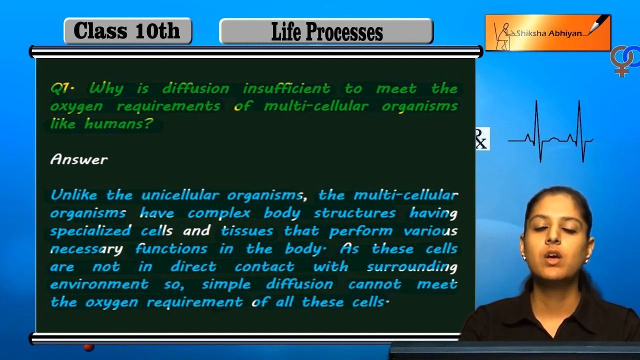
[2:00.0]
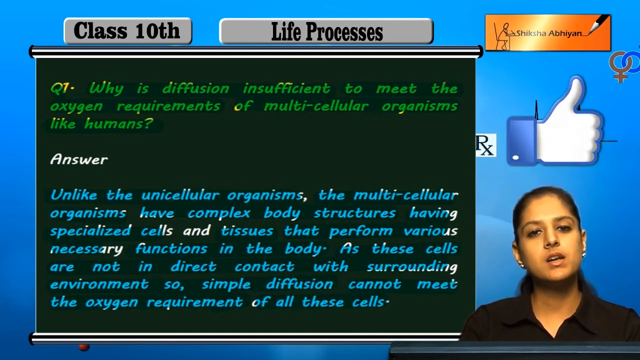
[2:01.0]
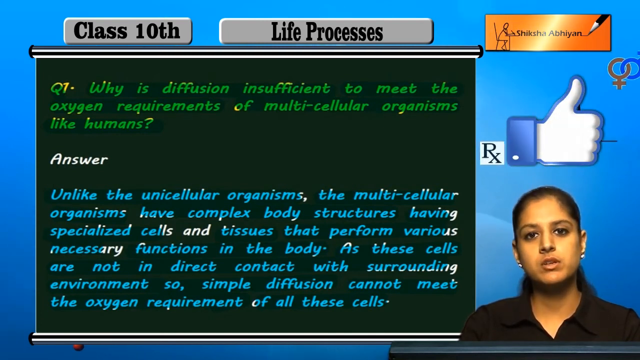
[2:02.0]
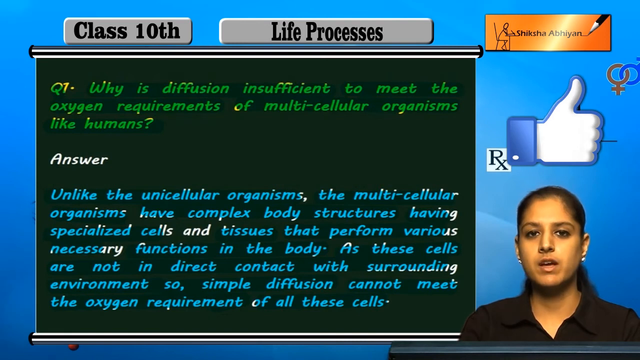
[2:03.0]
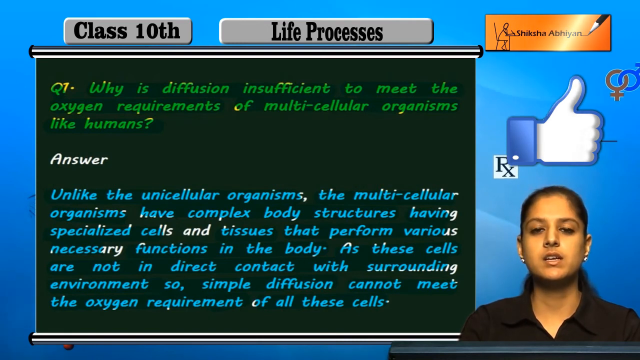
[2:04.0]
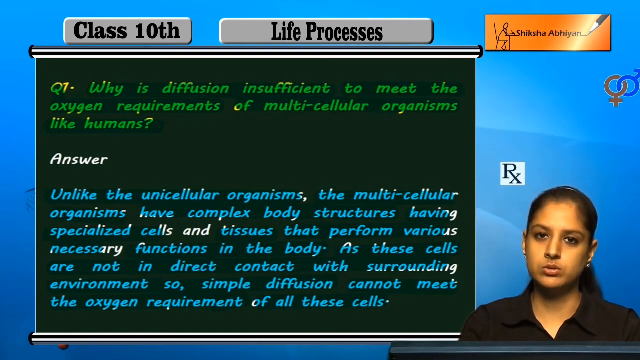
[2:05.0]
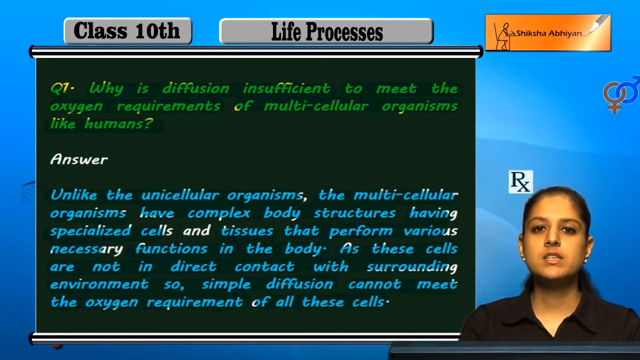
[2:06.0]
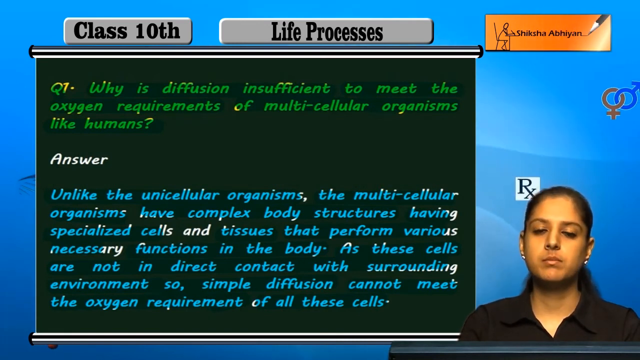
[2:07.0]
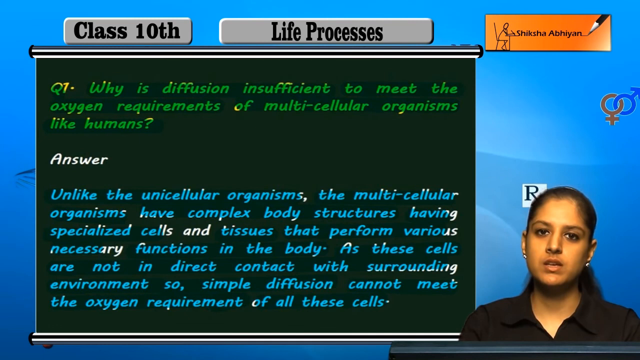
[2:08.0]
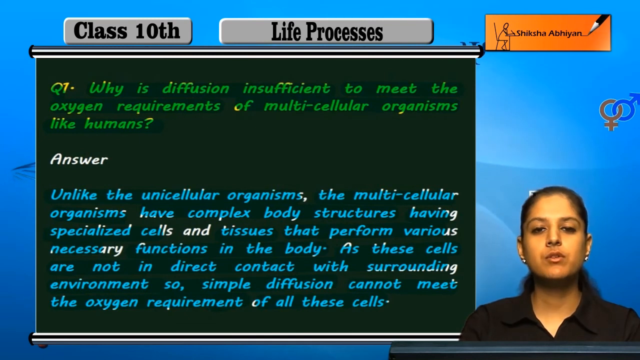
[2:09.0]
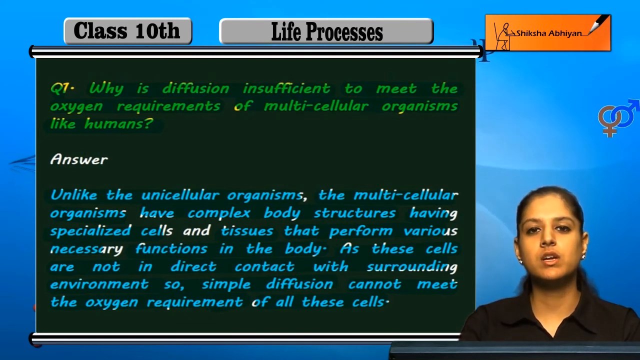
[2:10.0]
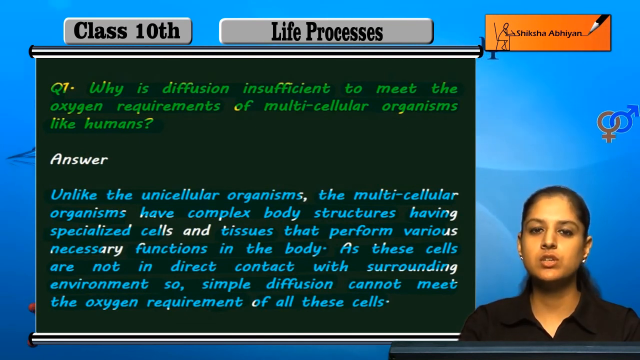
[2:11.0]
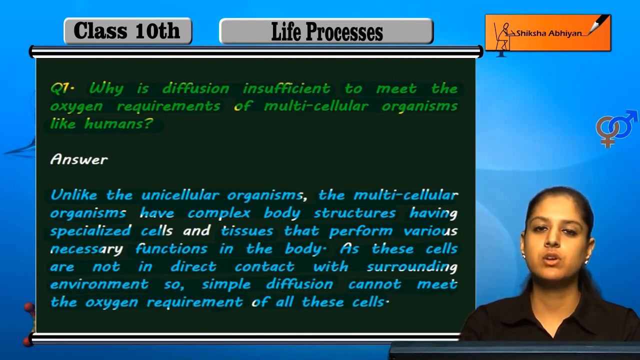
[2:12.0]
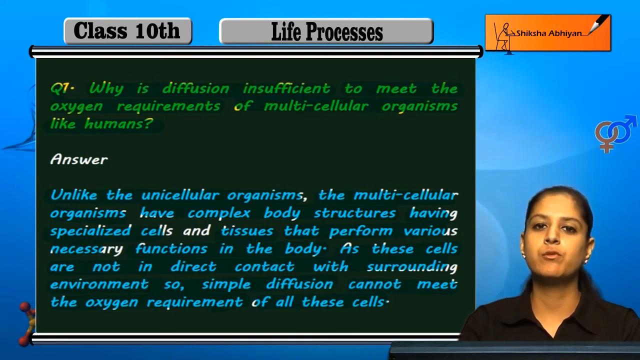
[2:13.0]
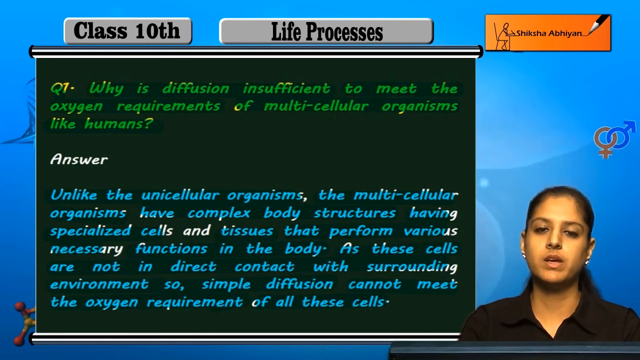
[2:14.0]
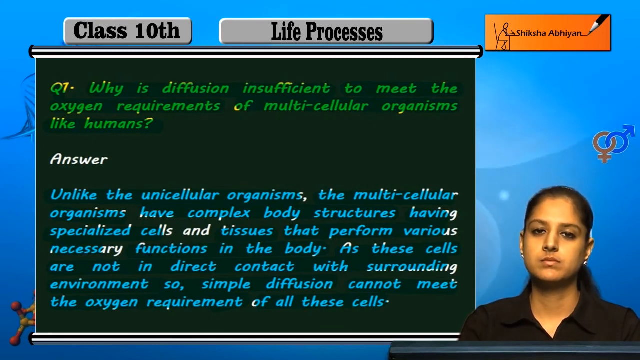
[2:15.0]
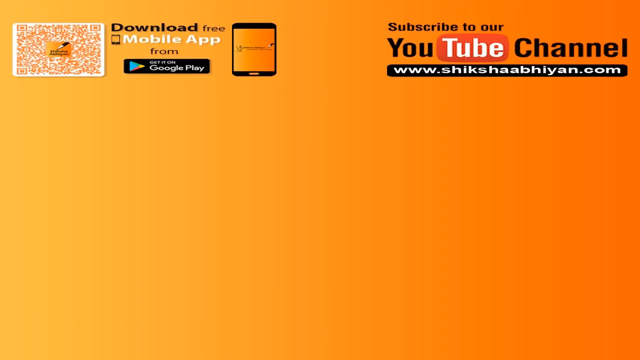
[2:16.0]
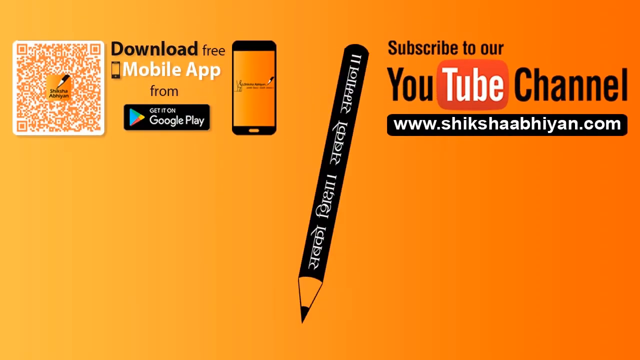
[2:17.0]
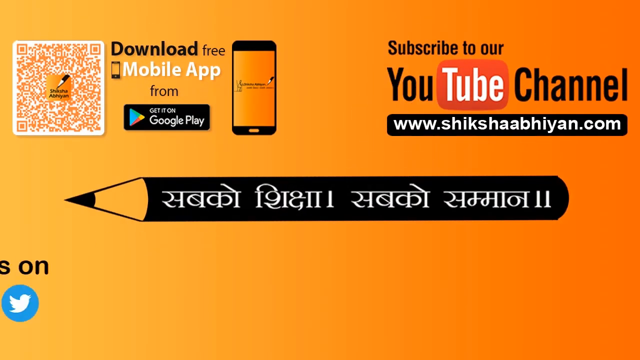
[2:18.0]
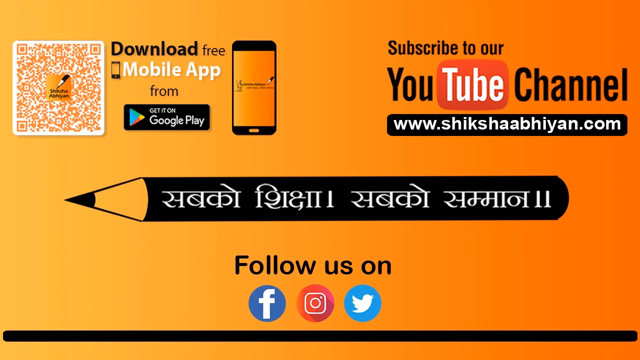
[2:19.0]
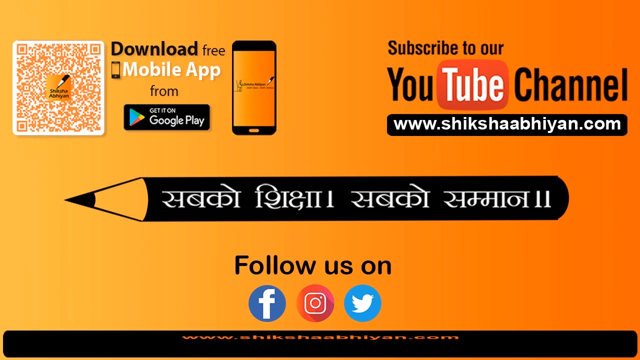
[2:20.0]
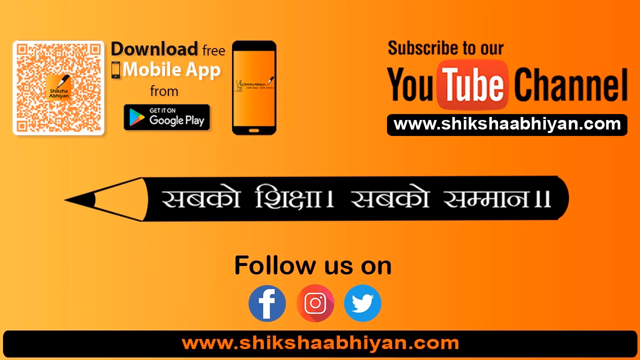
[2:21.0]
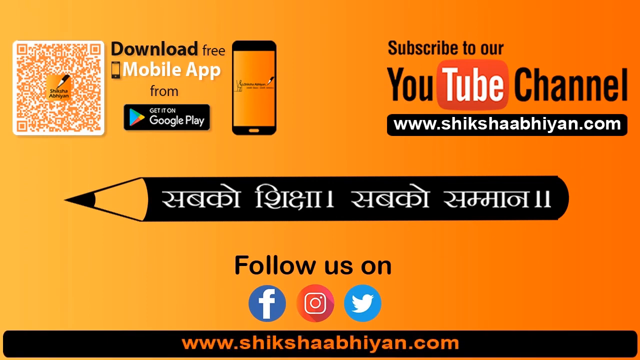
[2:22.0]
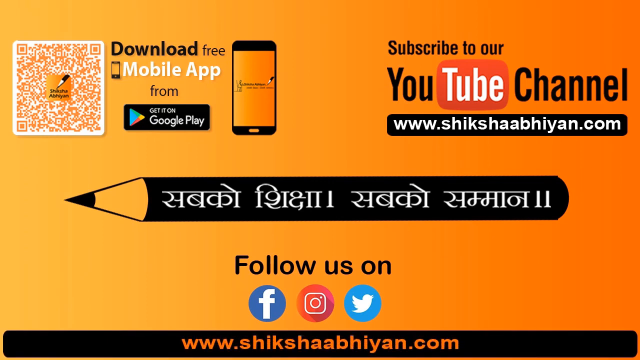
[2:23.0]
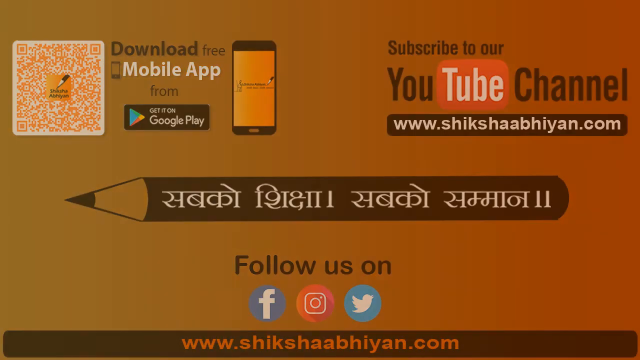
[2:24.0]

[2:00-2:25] The woman is still explaining the answer in the lower right-hand part of the screen. Above her head, an overlay with a Facebook like button comes up, apparently asking people to subscribe to the channel's Facebook page. The instruction part then ends and the video moves to an ending screen with a number of advertisements. On the lower part it says "follow us on," with three buttons below: Facebook, Instagram and Twitter. In the upper left it says "download free mobile app from Google Play." In the top right of the screen, another overlay says "subscribe to our YouTube channel," with the URL to the person's website below it. The ending page is full of social media buttons and links.